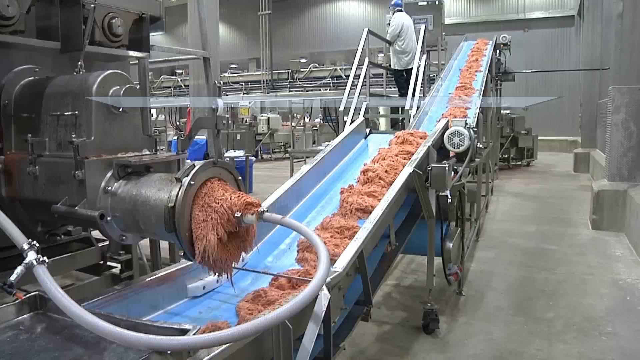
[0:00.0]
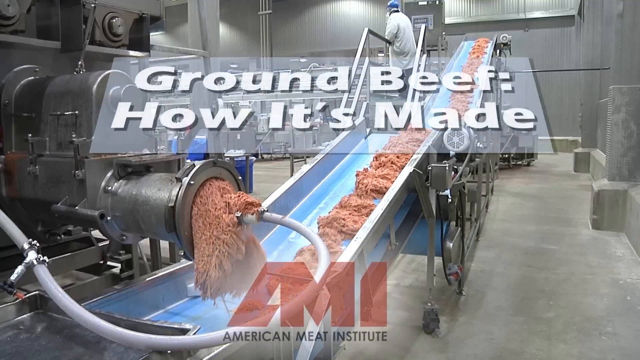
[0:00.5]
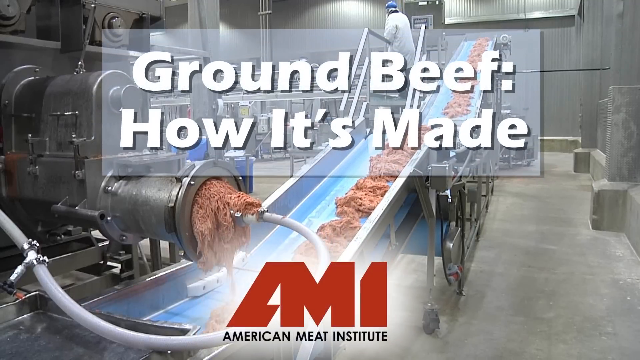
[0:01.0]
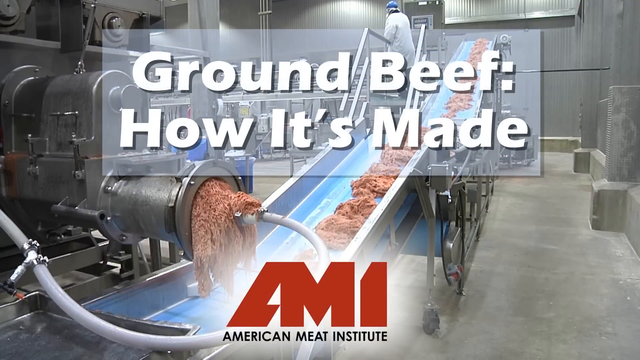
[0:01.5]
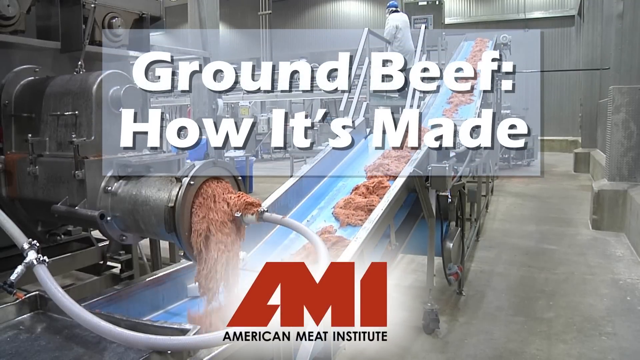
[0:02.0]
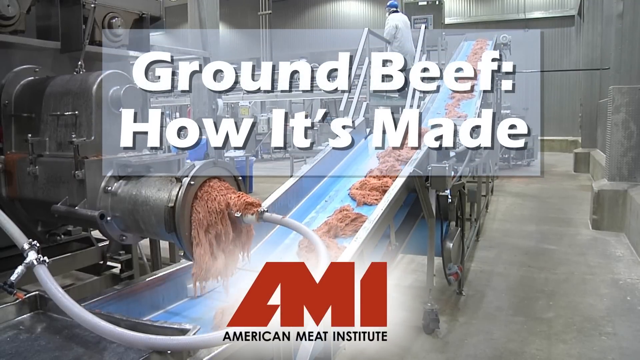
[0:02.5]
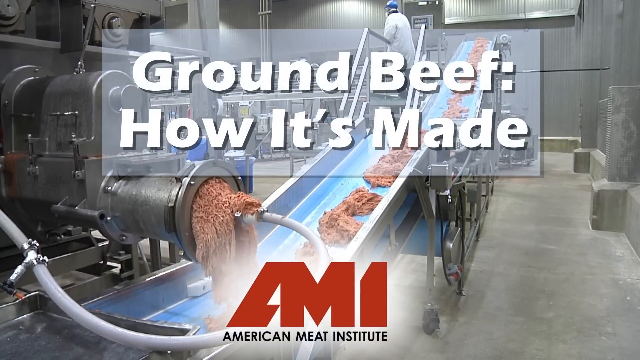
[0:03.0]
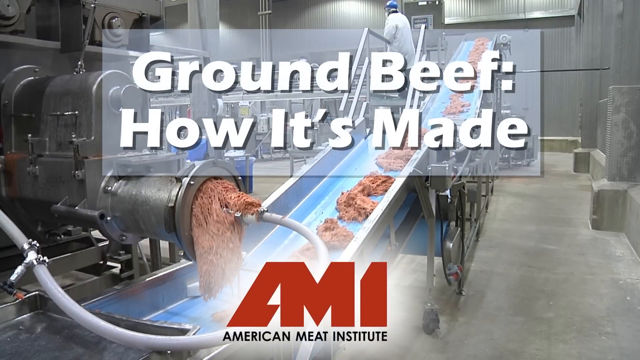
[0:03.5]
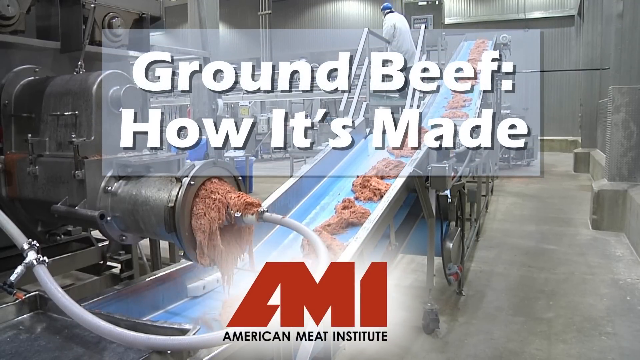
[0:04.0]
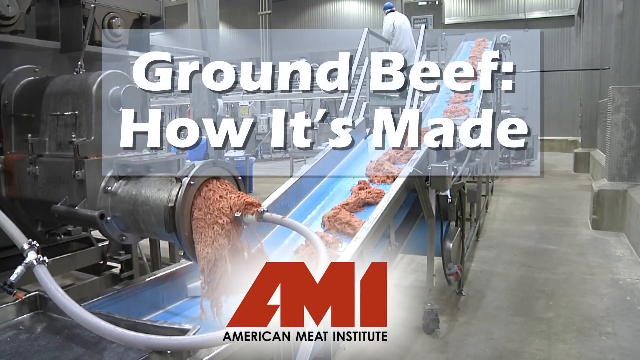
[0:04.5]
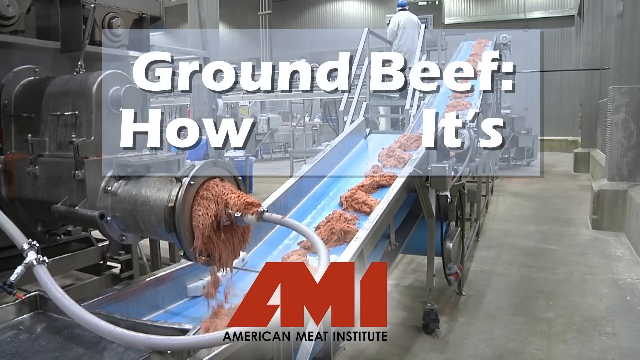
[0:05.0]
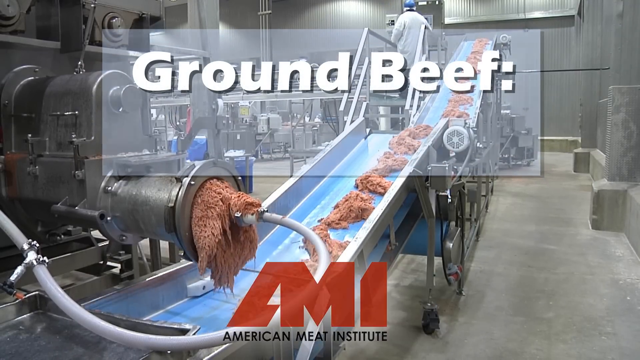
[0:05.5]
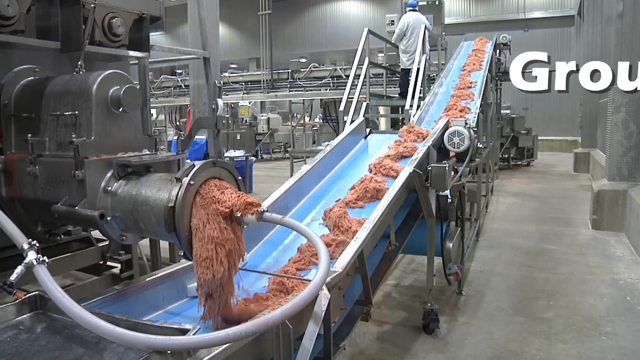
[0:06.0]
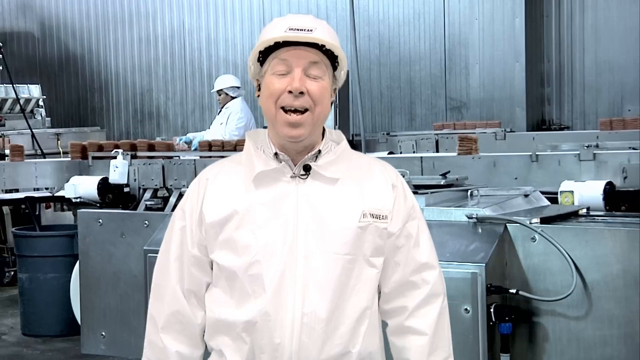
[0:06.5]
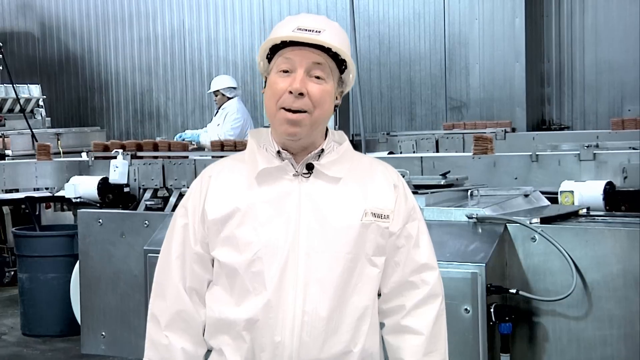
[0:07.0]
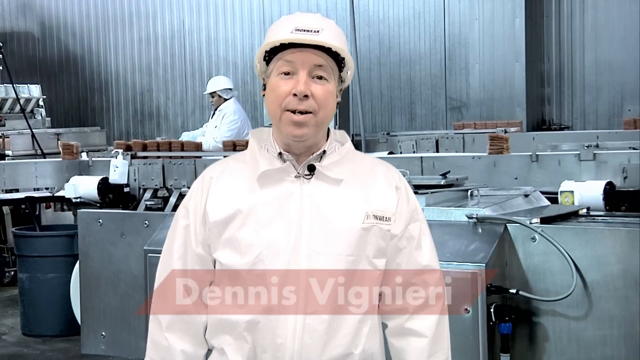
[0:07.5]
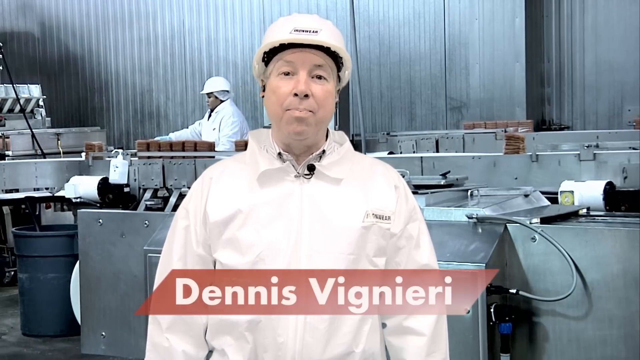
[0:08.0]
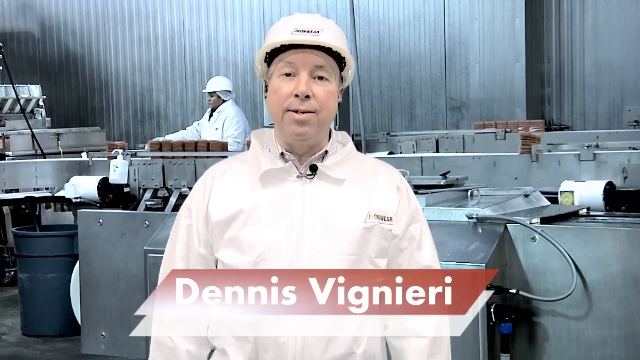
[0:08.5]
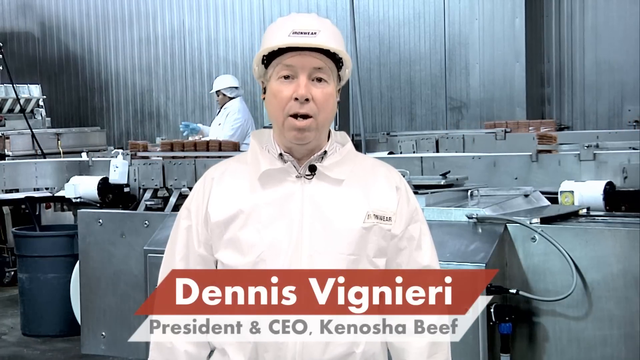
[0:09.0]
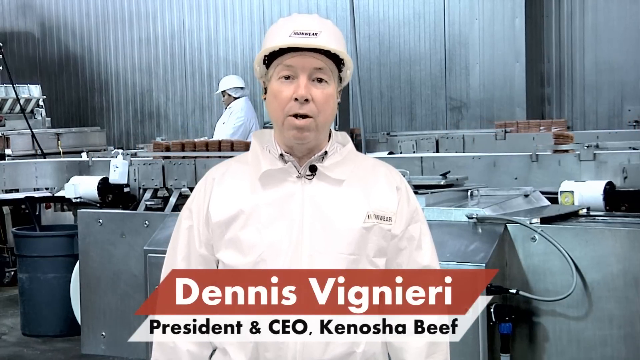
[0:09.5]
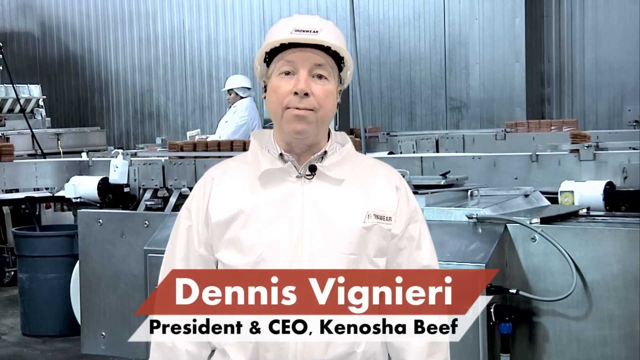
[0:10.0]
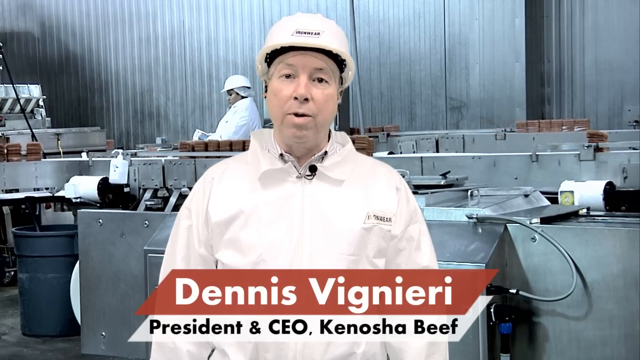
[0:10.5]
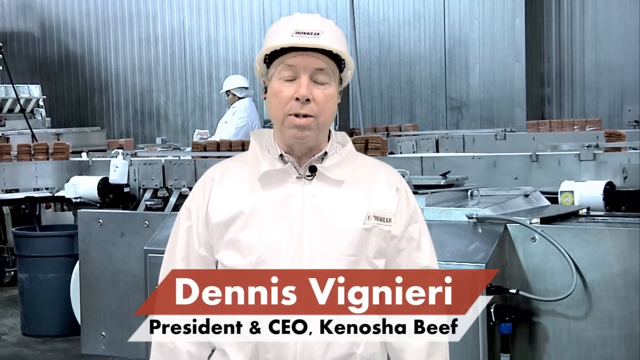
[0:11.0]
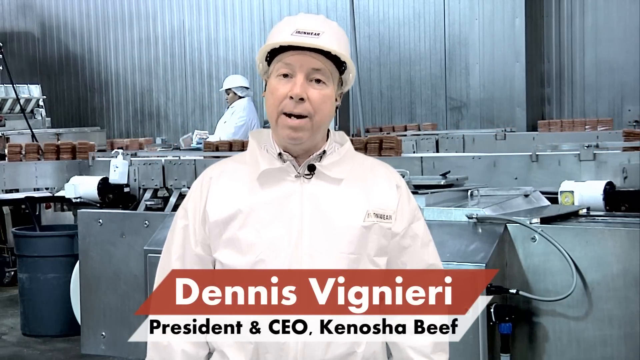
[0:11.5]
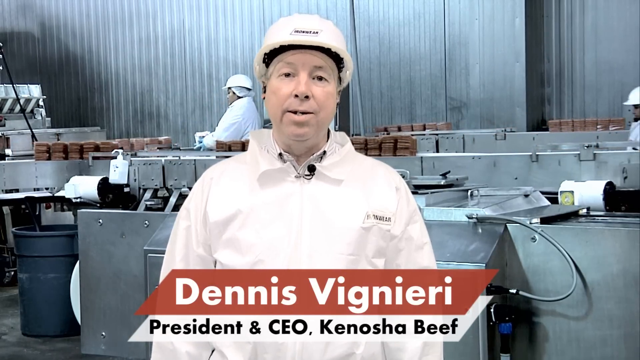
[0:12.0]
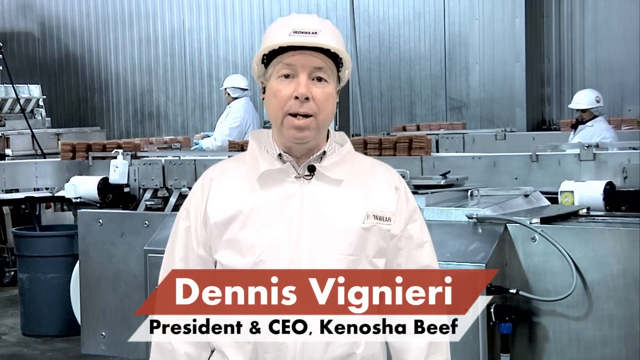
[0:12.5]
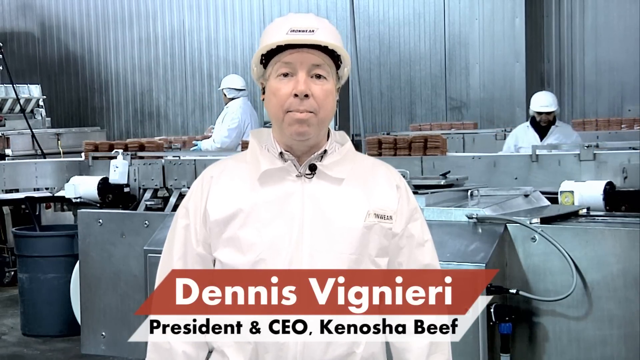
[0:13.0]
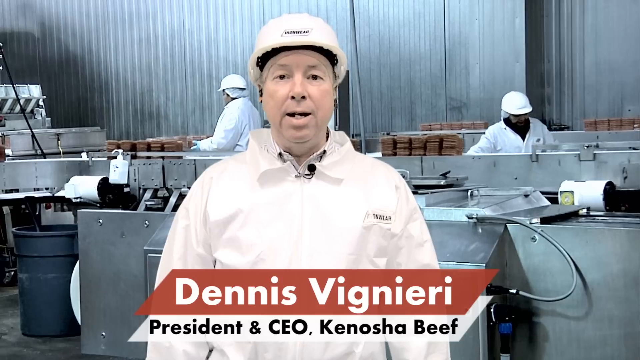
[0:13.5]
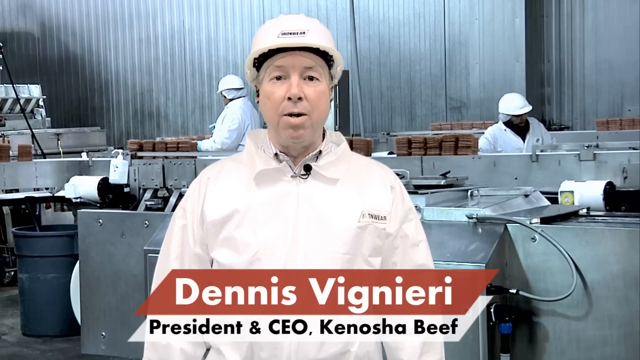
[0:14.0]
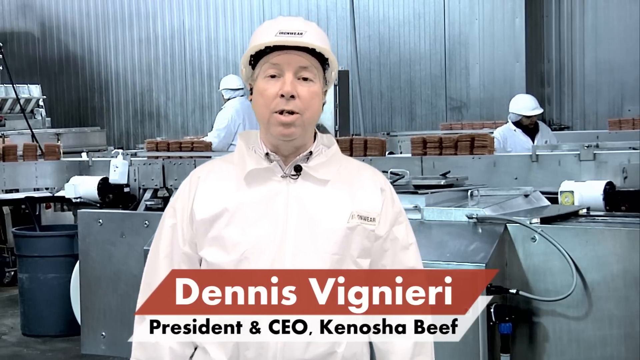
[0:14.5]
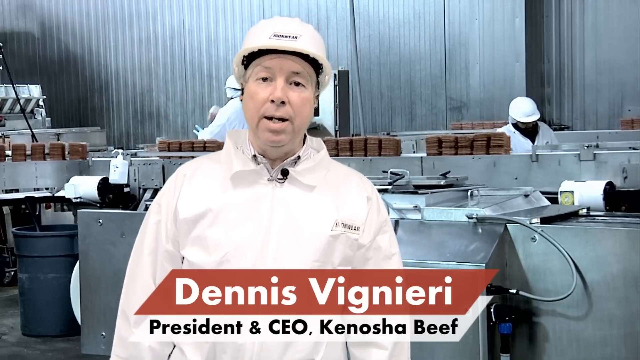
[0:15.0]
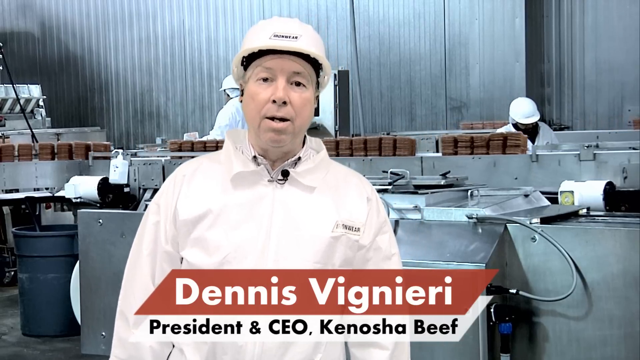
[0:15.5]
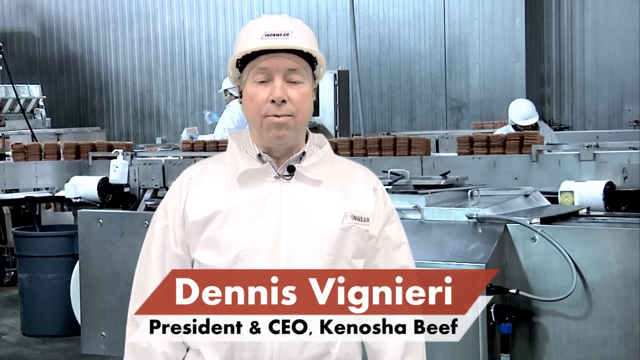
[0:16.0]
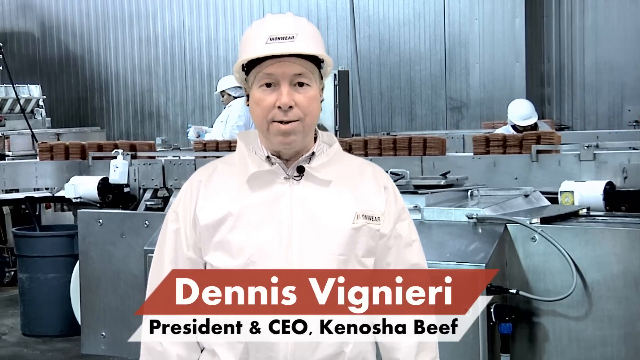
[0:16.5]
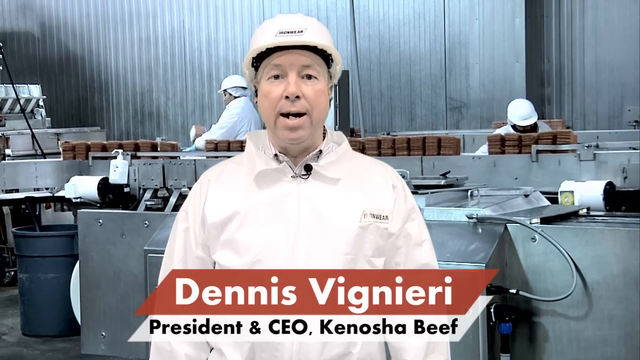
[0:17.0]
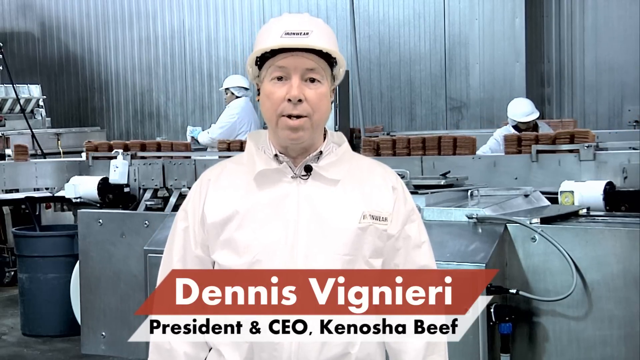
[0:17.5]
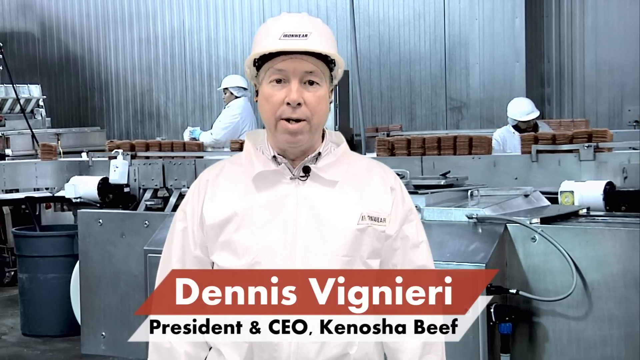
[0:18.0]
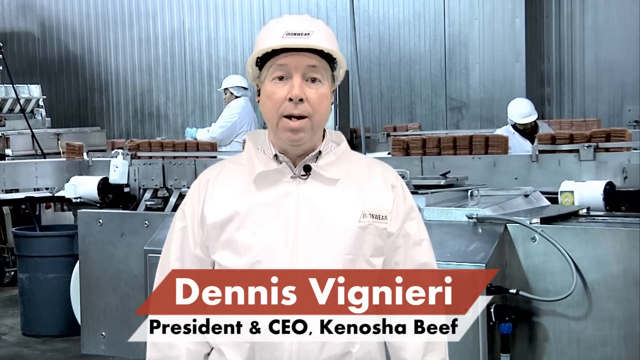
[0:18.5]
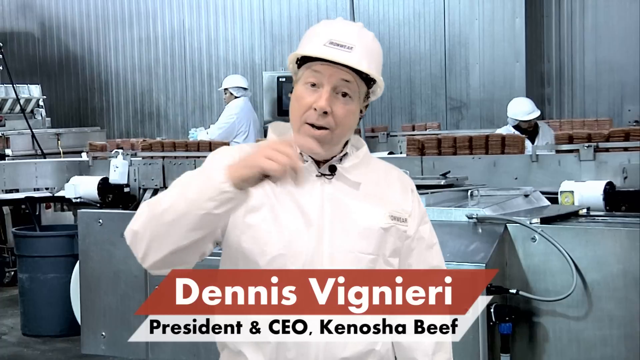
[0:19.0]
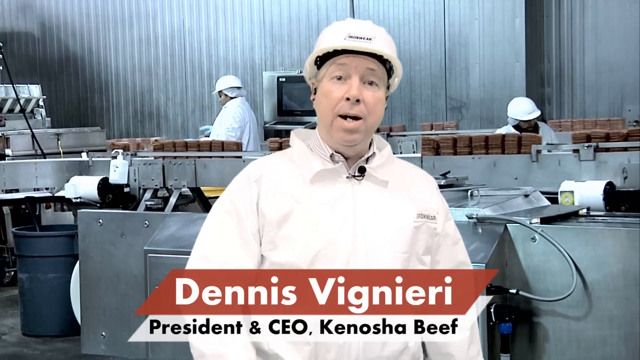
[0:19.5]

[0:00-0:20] The subject appears to be ground beef and how it is processed in a factory. The people all look like factory workers, wearing white hard hats, laboratory coats and latex gloves. They are processing the meat by packing patties and possibly pressing patties. The view changes from one person to two people in the background, with a man in front doing the talking. The setting seems to be a factory and does not really change. Text comes over the video explaining exactly where they are and what they are doing.